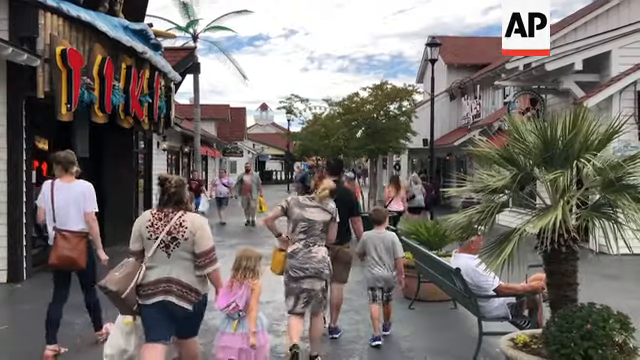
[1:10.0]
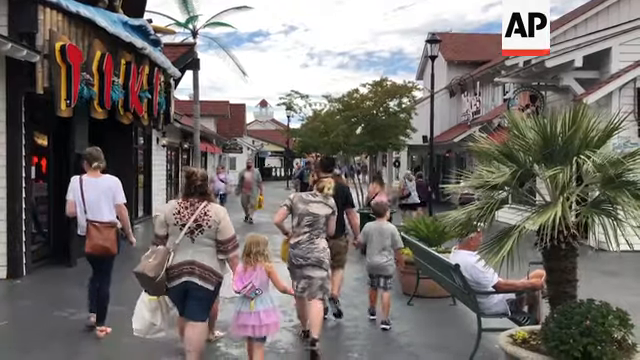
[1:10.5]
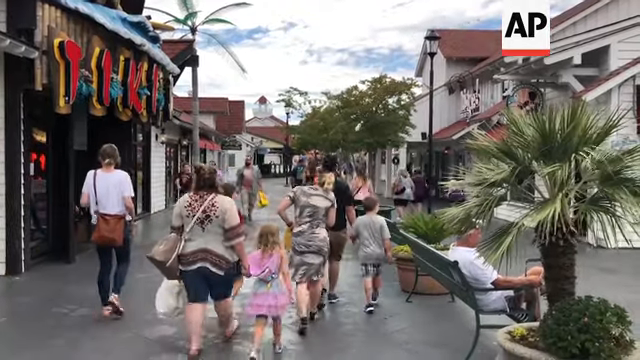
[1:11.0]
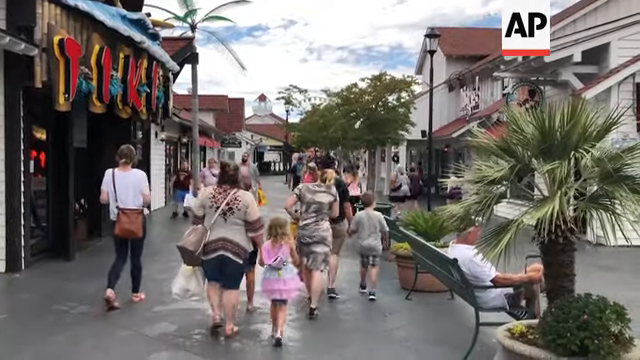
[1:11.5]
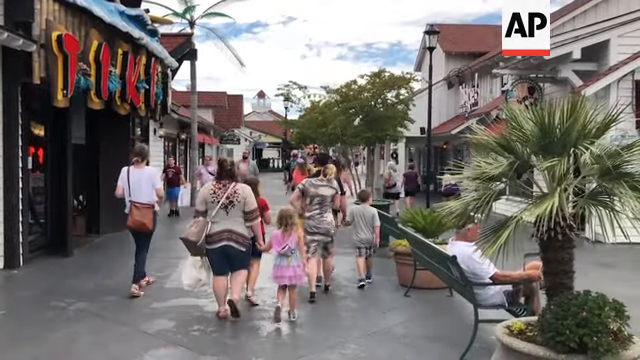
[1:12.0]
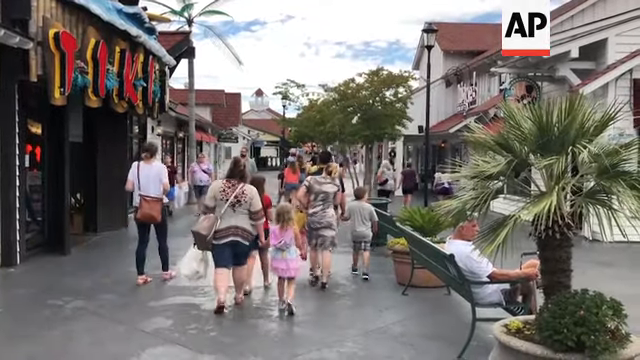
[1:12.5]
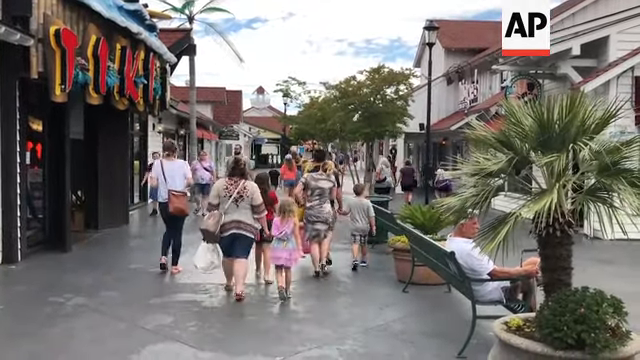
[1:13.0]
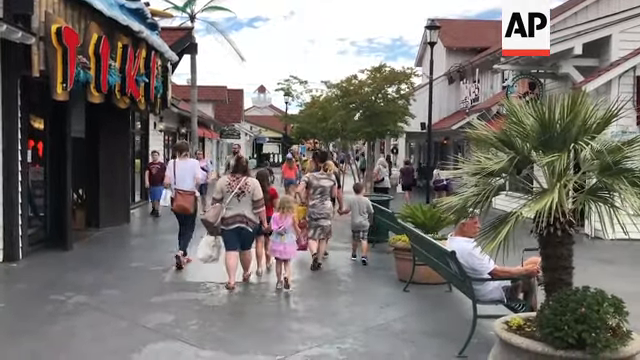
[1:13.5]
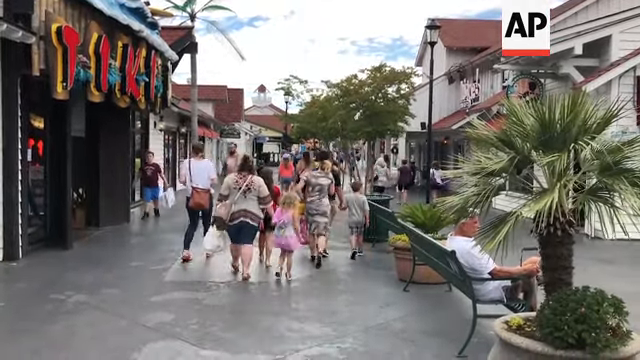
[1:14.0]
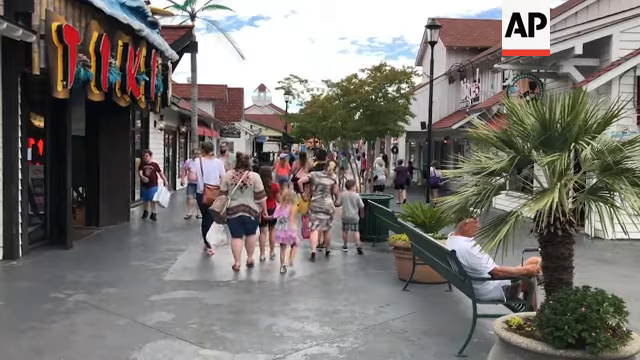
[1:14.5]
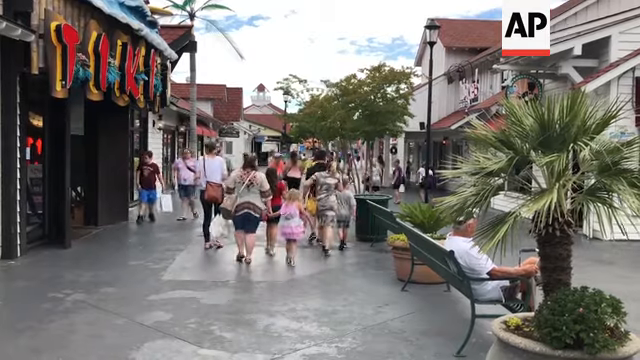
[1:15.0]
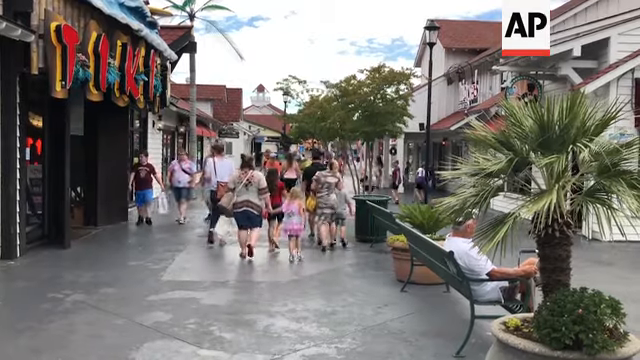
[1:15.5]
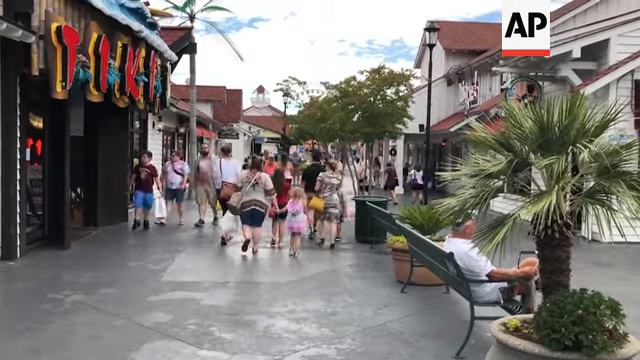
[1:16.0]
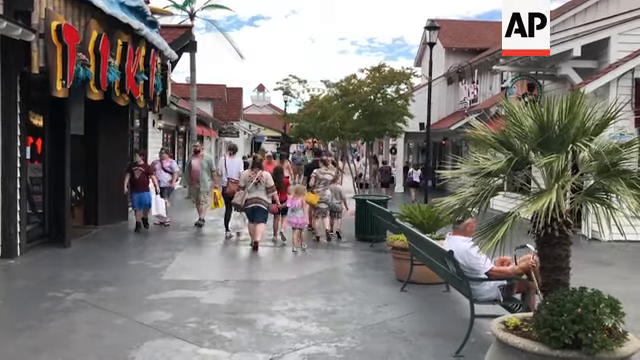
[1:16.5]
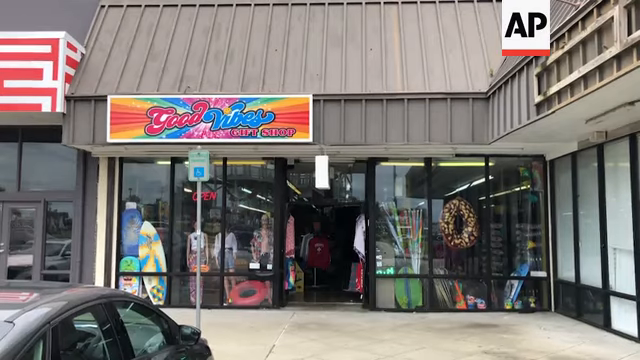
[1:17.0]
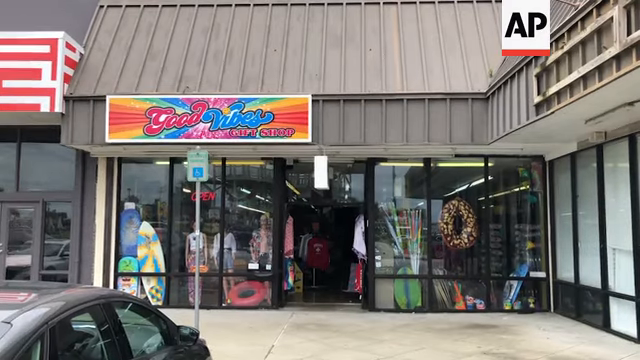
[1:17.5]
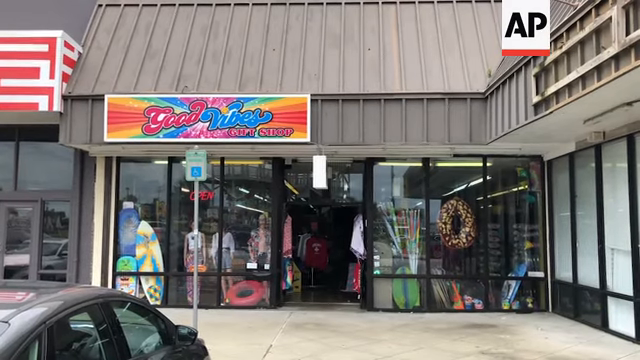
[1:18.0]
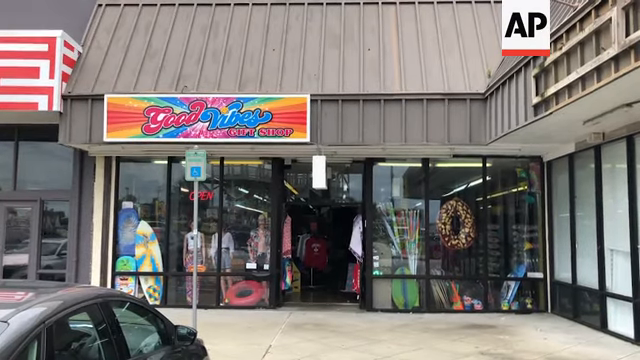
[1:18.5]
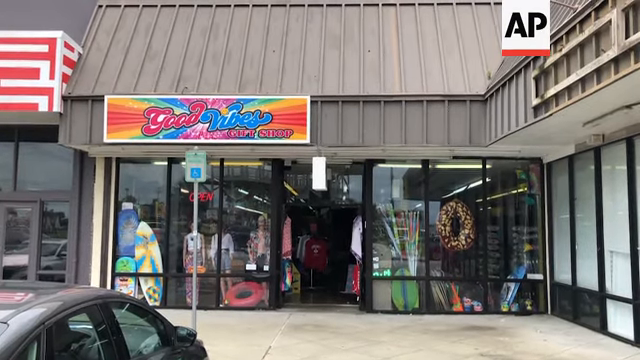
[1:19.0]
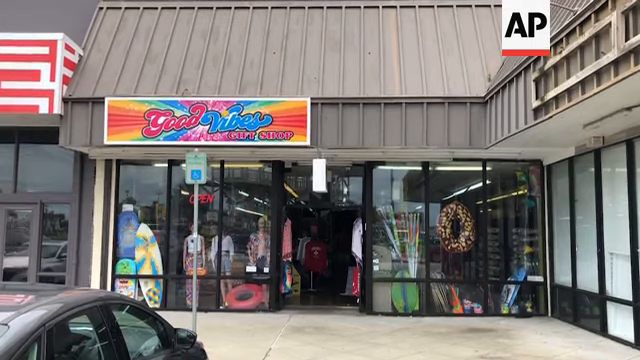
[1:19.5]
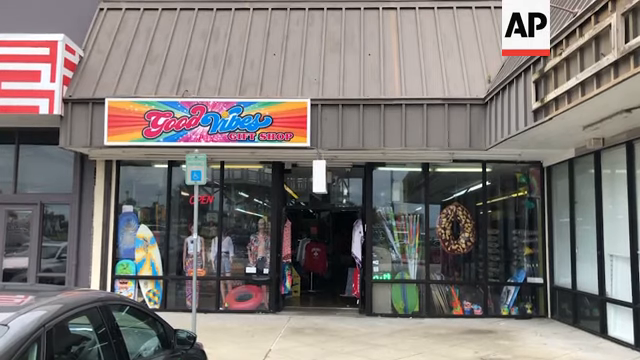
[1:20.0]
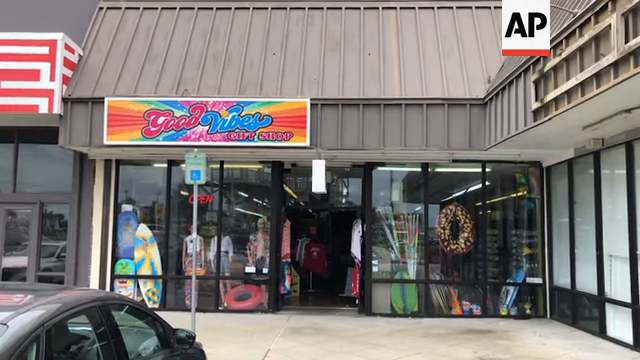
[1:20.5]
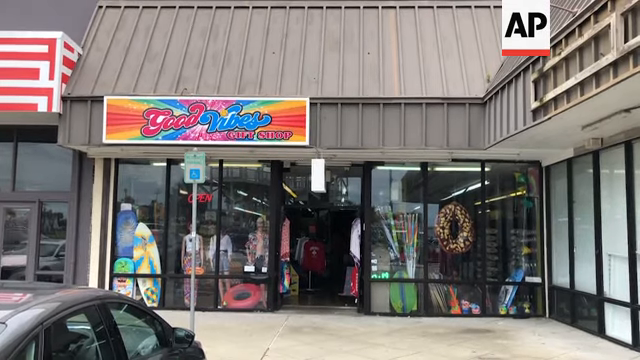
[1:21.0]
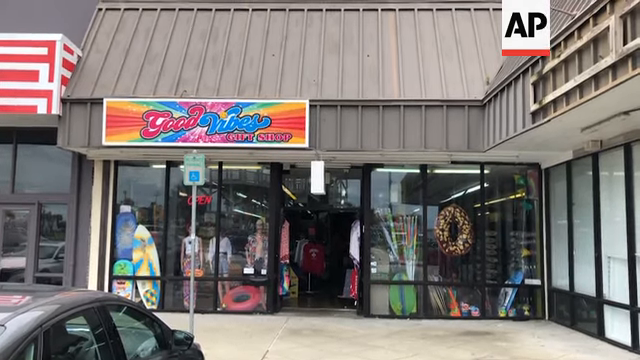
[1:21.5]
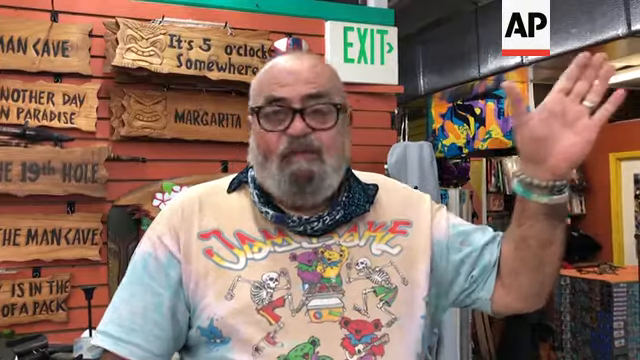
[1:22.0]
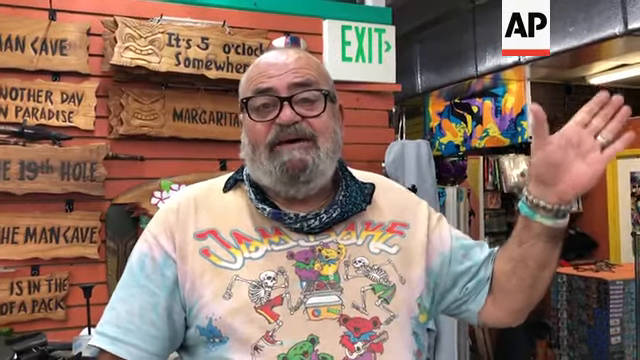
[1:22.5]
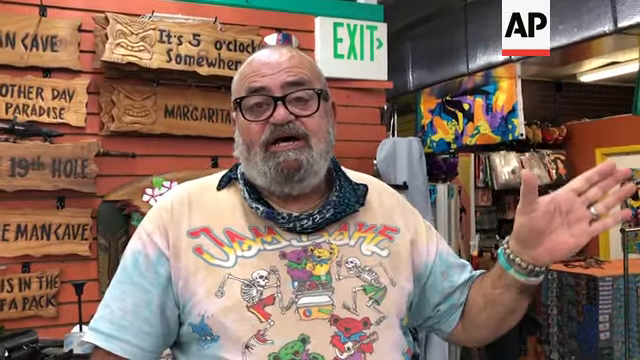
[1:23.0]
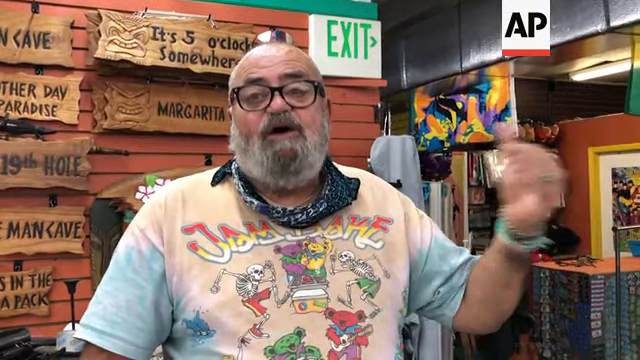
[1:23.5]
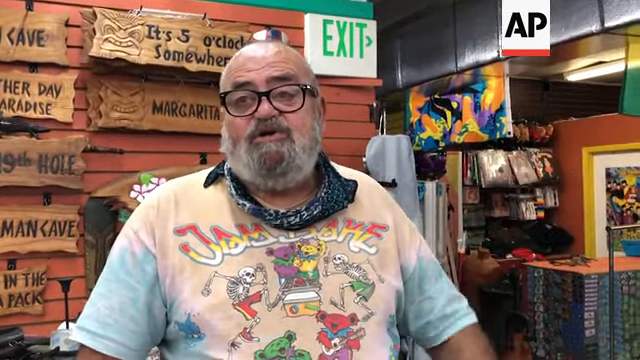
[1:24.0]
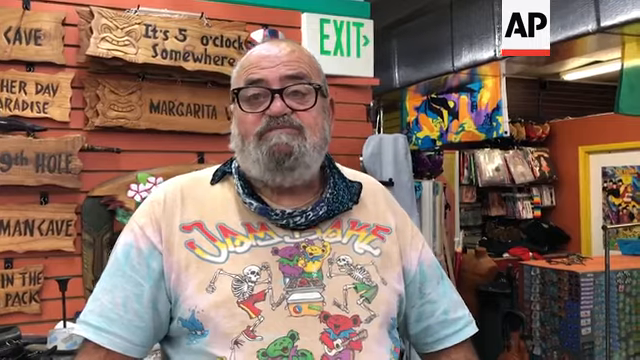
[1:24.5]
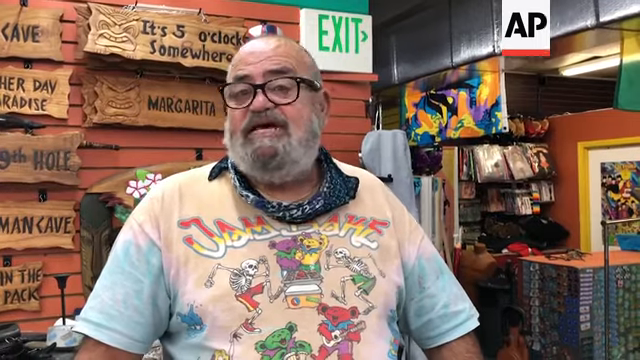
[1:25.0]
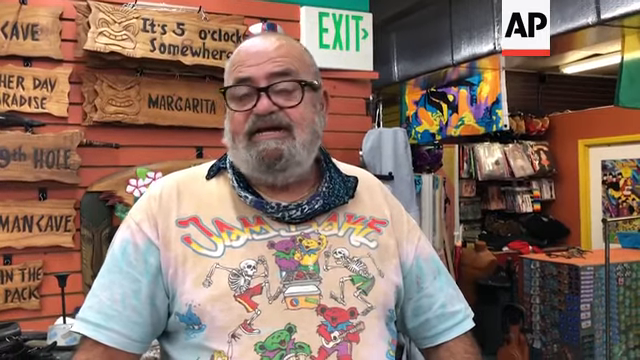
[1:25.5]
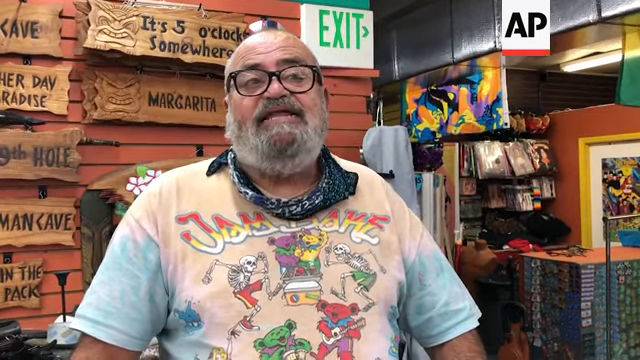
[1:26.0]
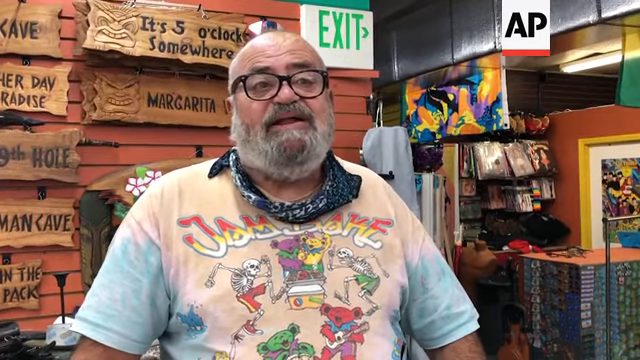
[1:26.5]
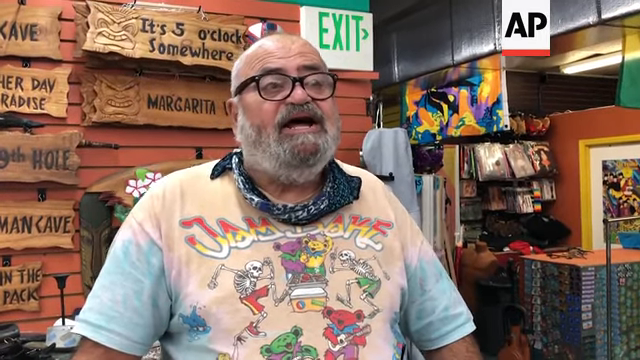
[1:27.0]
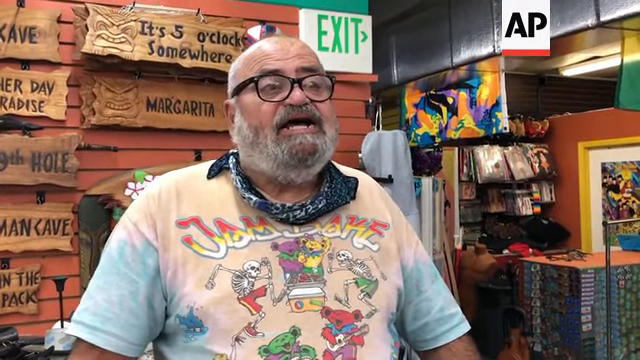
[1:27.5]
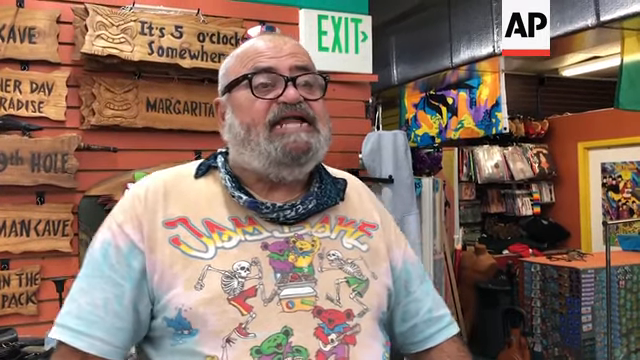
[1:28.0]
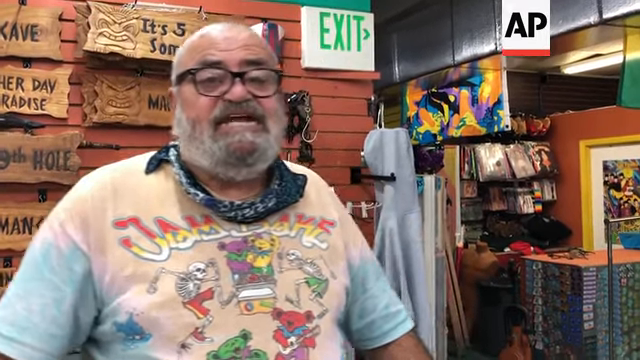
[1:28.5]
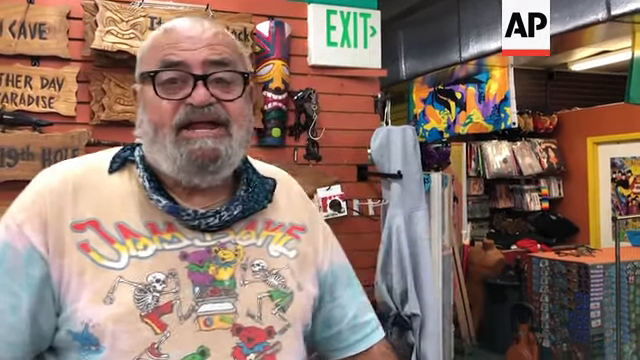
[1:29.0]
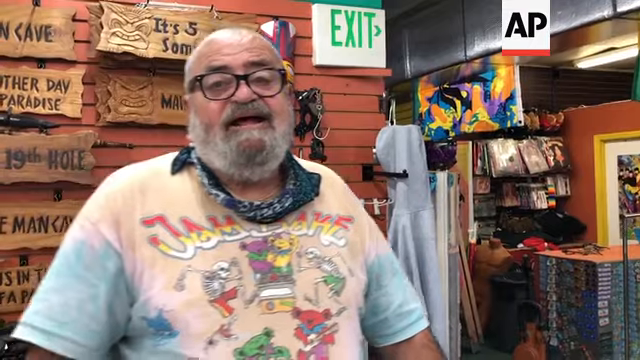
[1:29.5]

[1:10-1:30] A tiki restaurant is in the background, with individuals walking away from the camera in what looks like a little shopping district. Another individual sits on a park bench next to a palm tree. This is a paved road, not on the beach. The sky is blue and the sun is out. The video switches to other shops that look like part of a beach resort, with swimming items such as ocean boards, surfboards and floating devices. Inside a shop, a man is talking; he wears glasses, is bald, has a neckerchief around his neck, and wears some type of multicoloured tie-dyed shirt with dancing skeletons. The video then switches back to people walking in the shopping district.